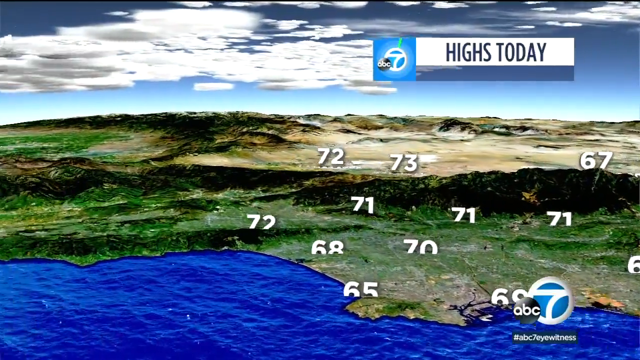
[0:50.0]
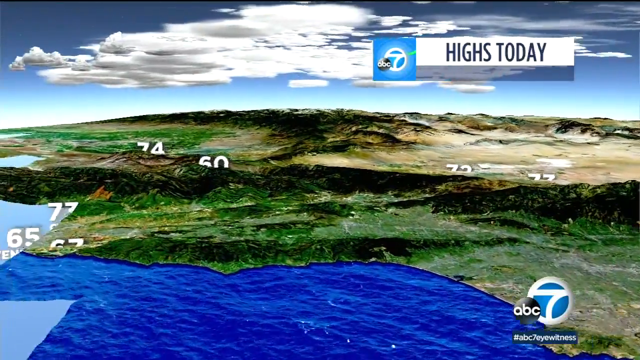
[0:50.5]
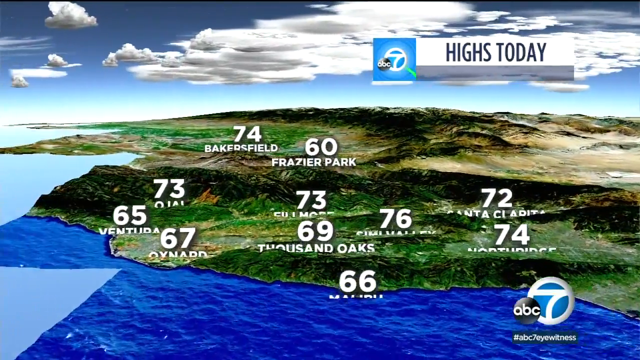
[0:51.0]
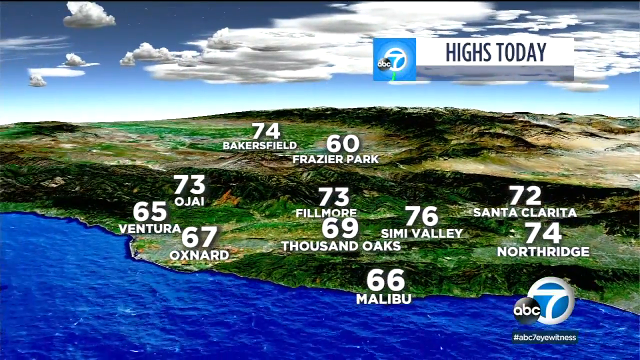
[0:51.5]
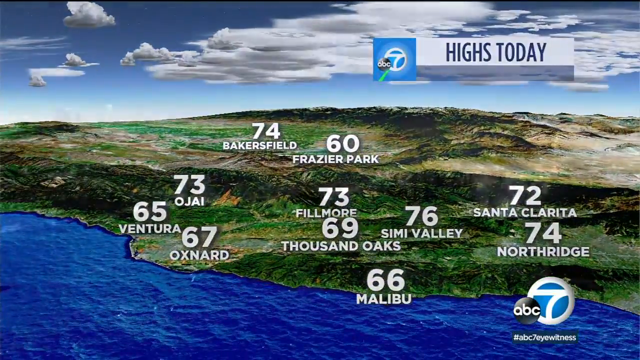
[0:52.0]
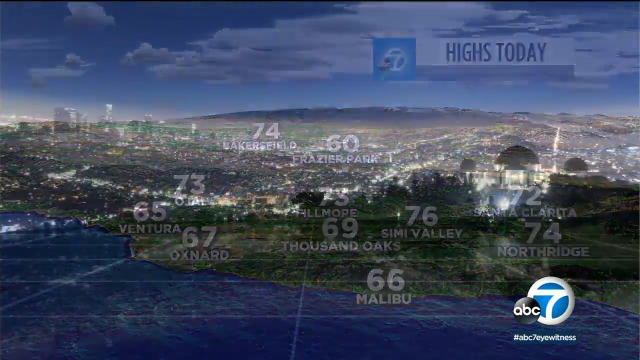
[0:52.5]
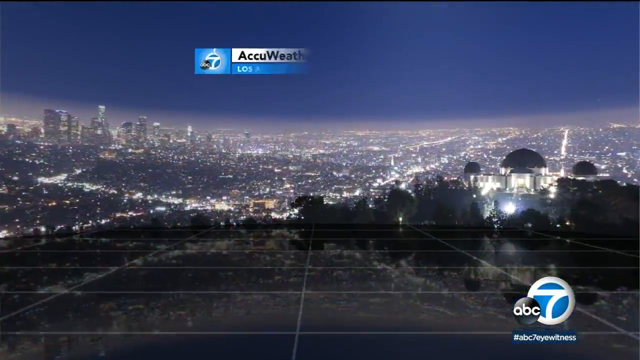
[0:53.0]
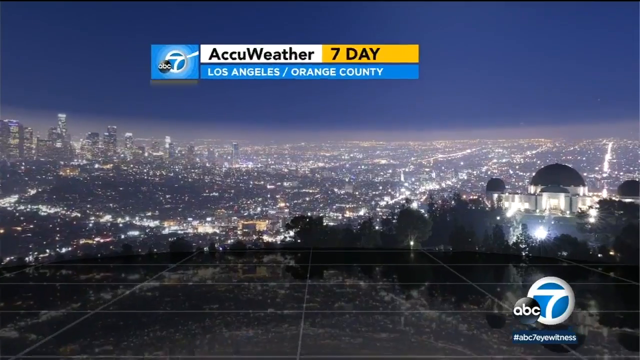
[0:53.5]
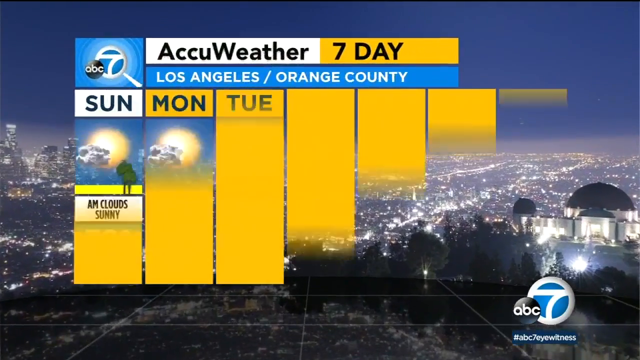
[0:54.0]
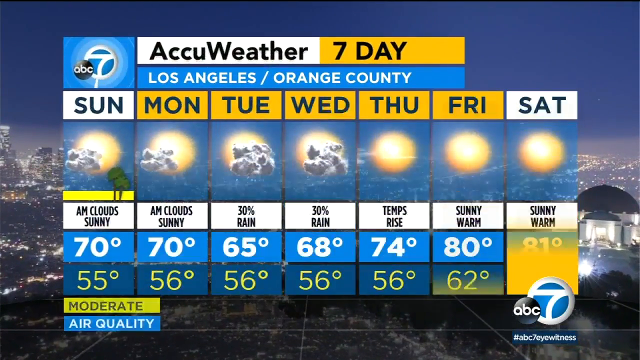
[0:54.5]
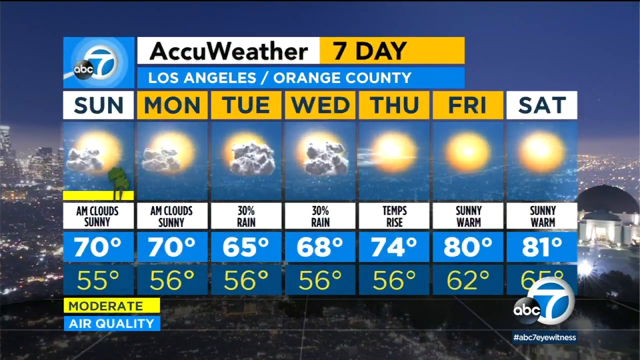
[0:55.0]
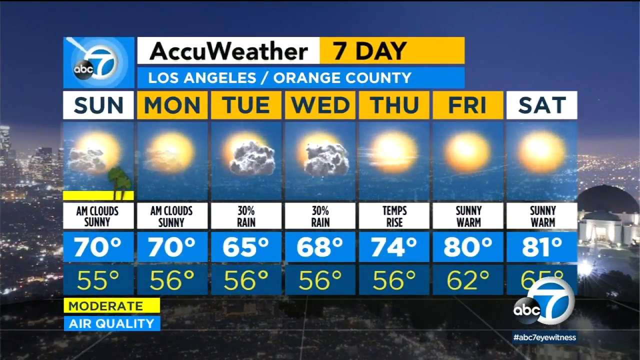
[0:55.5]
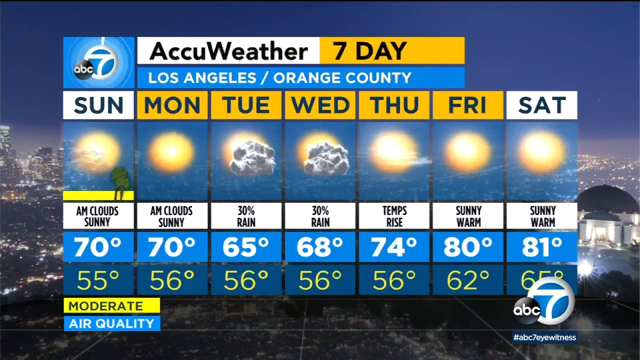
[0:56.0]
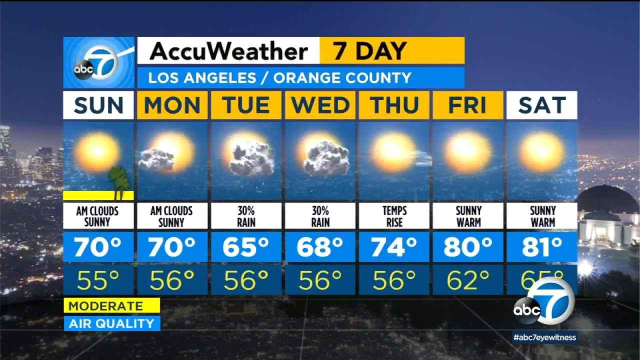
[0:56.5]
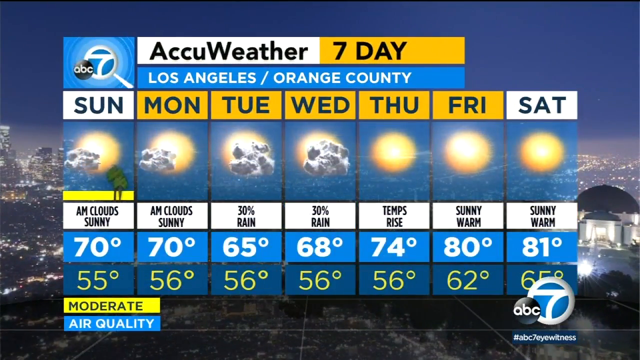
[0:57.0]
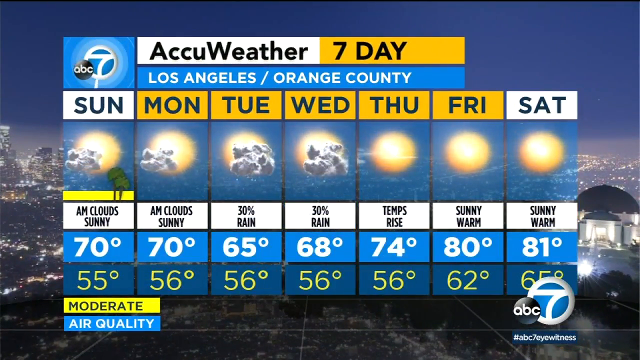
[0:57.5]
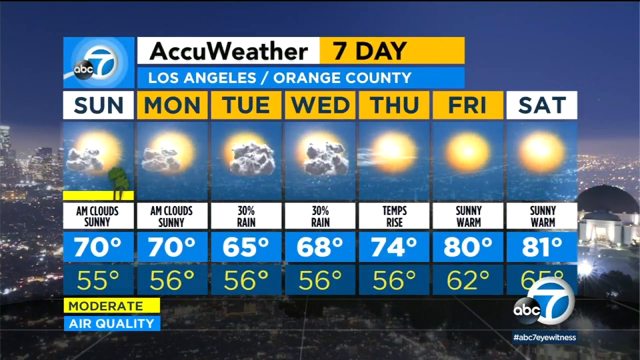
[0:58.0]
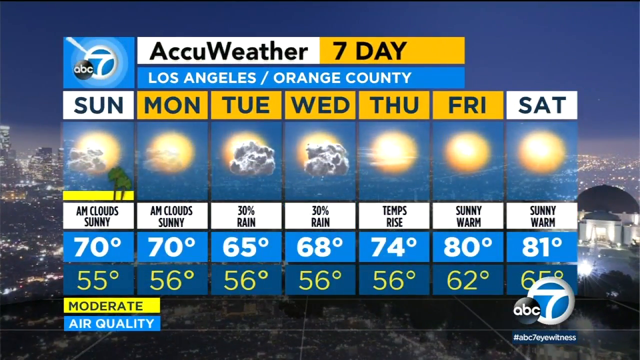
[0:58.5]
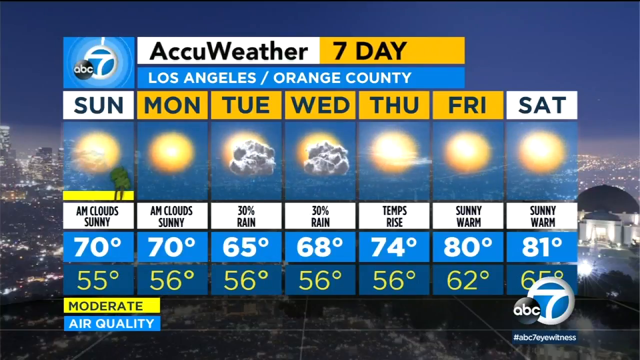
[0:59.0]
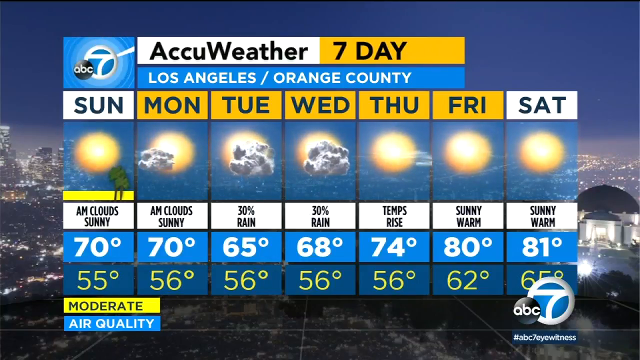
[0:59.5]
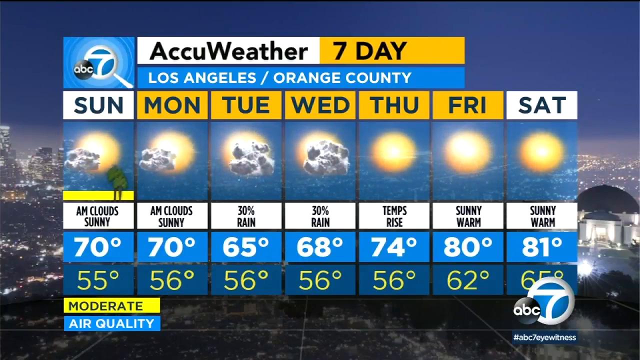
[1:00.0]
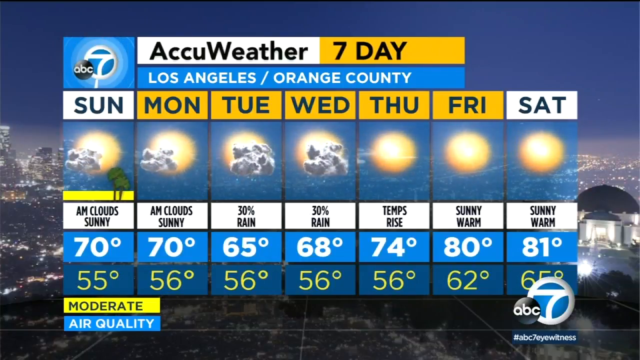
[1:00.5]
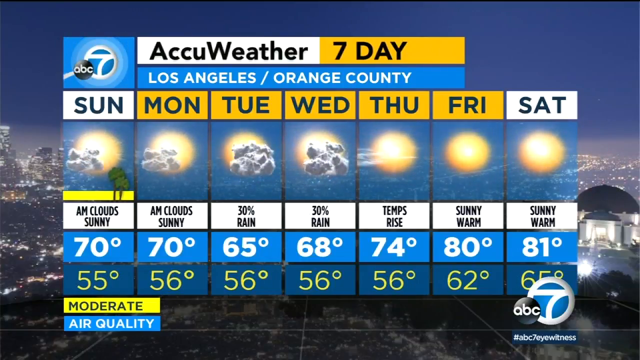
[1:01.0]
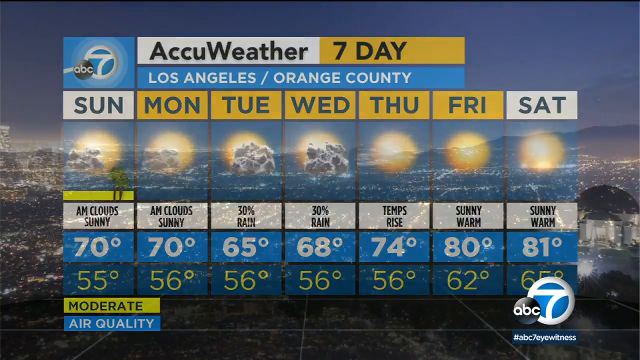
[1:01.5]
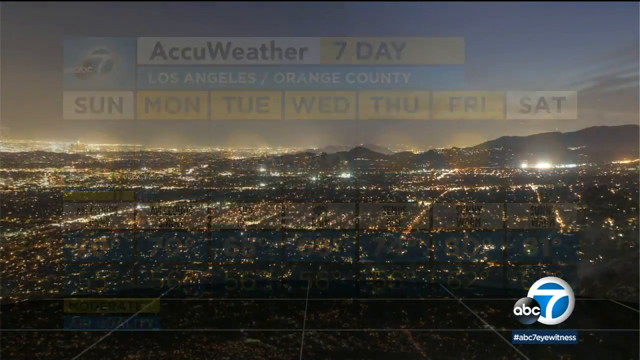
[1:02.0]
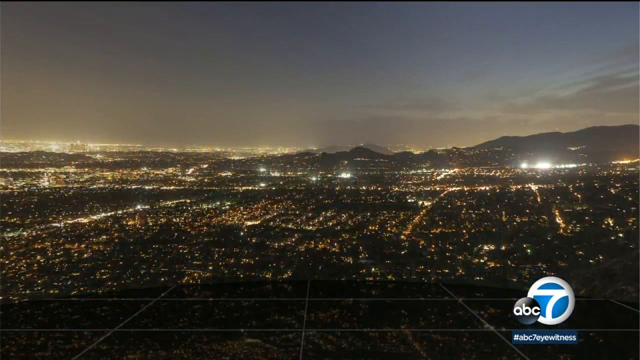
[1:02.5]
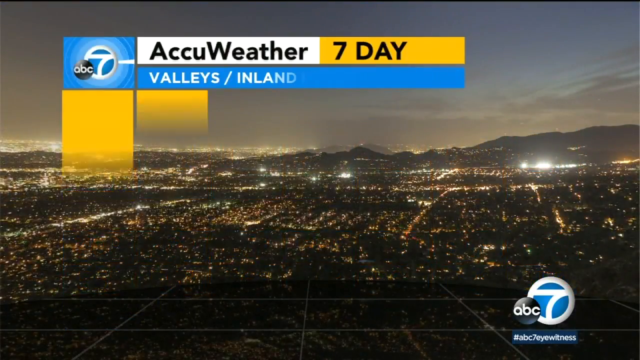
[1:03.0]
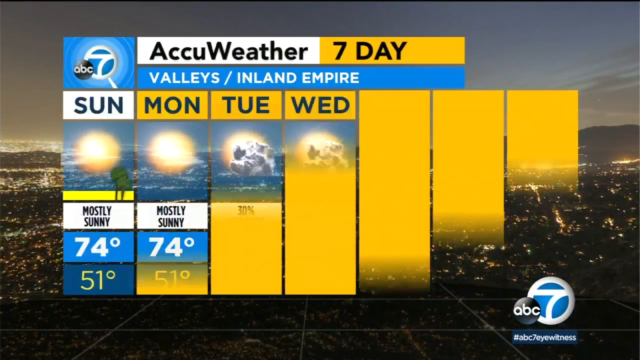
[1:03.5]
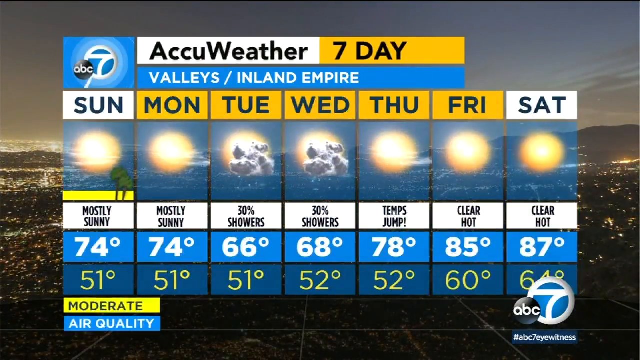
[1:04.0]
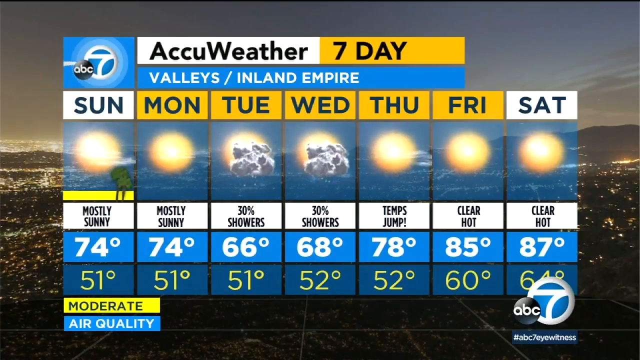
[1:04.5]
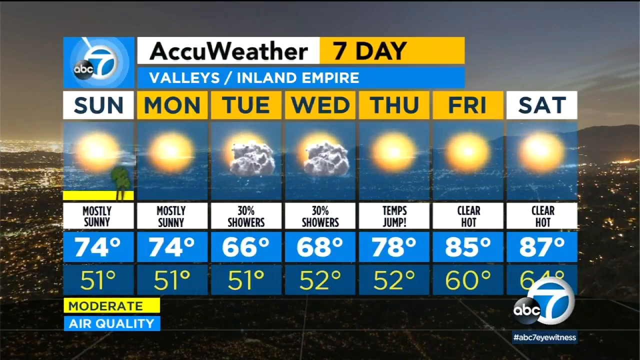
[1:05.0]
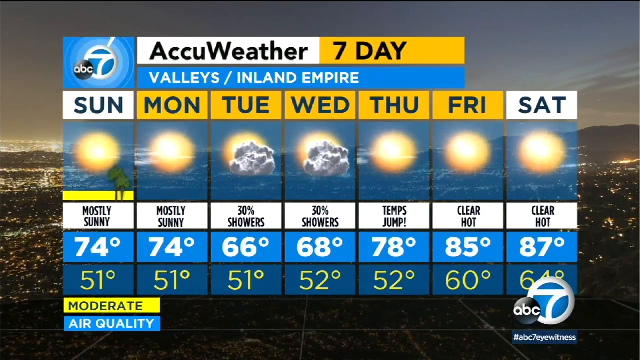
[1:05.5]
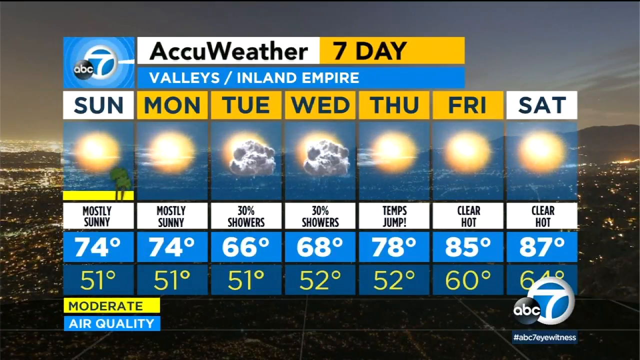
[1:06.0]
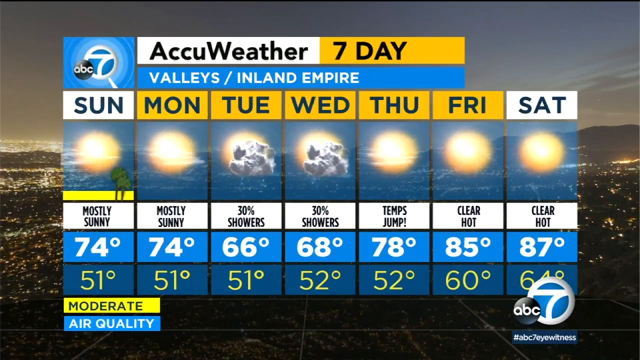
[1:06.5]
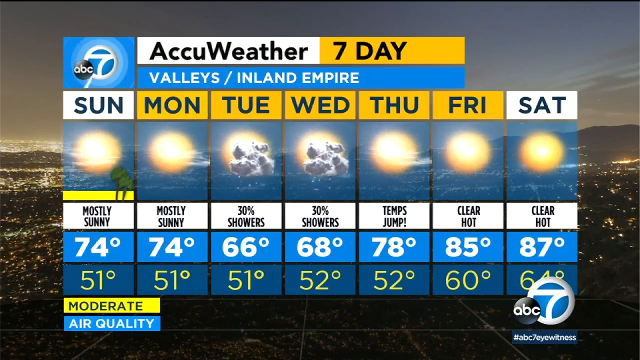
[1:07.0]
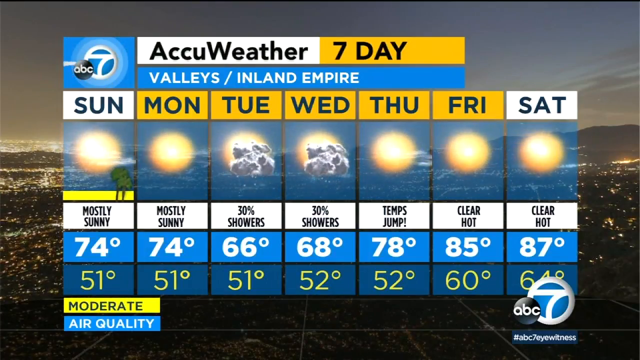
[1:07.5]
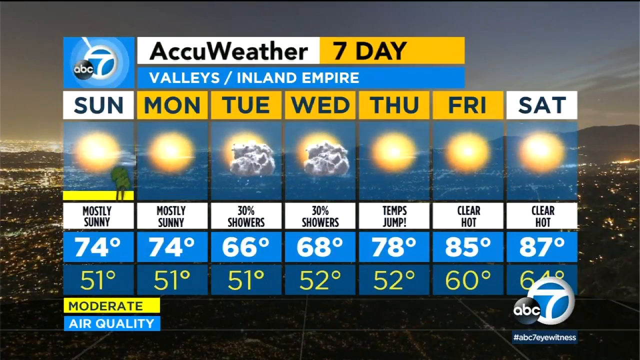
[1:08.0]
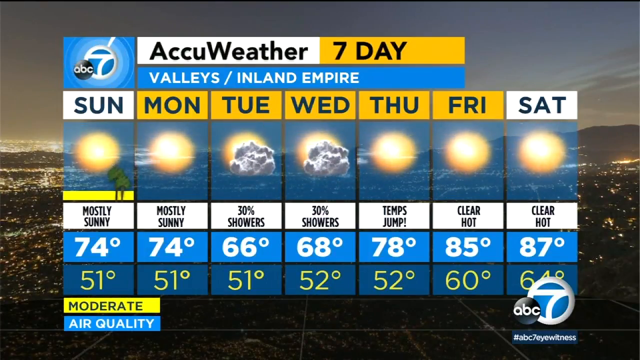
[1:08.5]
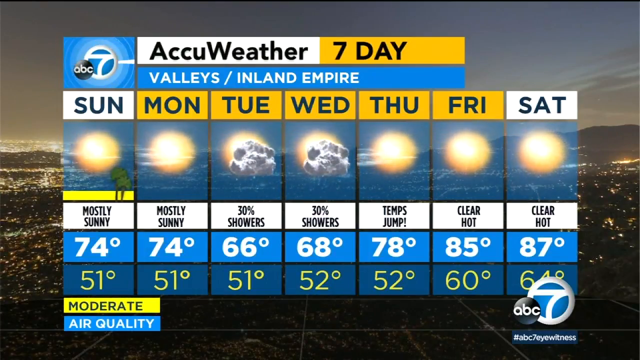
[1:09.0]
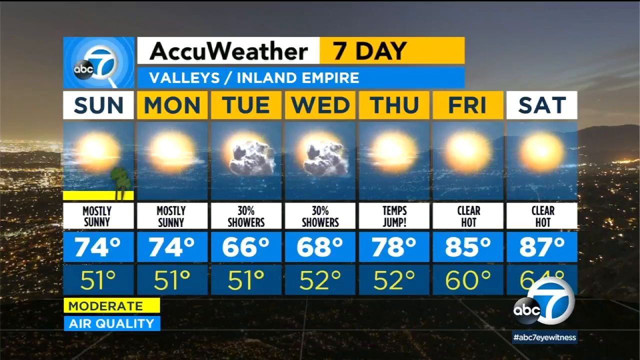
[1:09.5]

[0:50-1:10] An "AccuWeather seven day Los Angeles / Orange County" forecast lists Sunday through Saturday. Sunday shows AM clouds and sunny, 70 degrees, with 55 degrees written in yellow underneath. Monday shows AM clouds, sunny, 70 and 56 degrees. Tuesday shows 30% rain with 65 and 56 degrees; Wednesday 30% rain, 68 and 56 degrees; Thursday a temperature rise, 74 and 56 degrees; Friday sunny and warm, 80 and 62 degrees; Saturday sunny and warm, 81 and 65 degrees. "Moderate" also appears for Los Angeles and Orange County. An AccuWeather seven-day forecast for the valleys and Inland Empire follows: mostly sunny Sunday and Monday, 30% showers Tuesday and Wednesday, a temperature jump to 78 degrees Thursday, clearing out Friday at 85 degrees, and clearing out Saturday at 87 degrees.